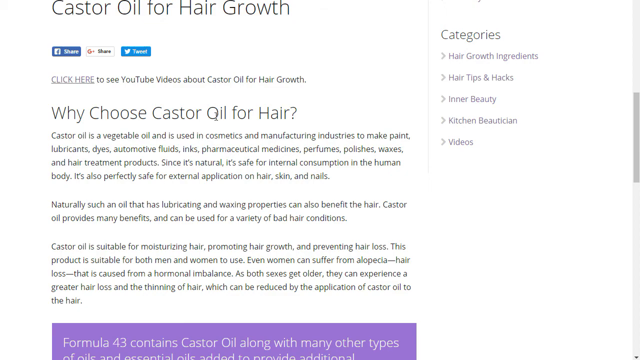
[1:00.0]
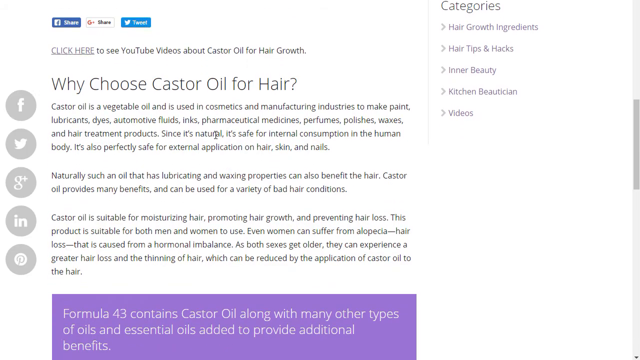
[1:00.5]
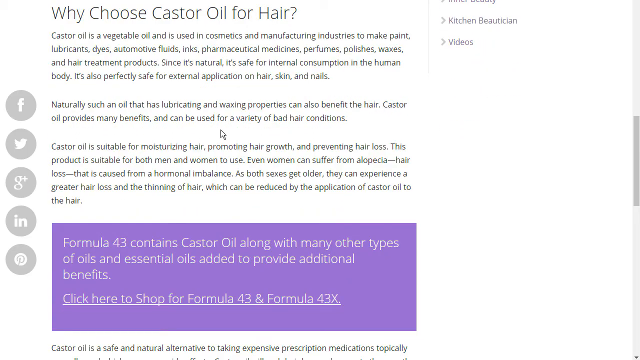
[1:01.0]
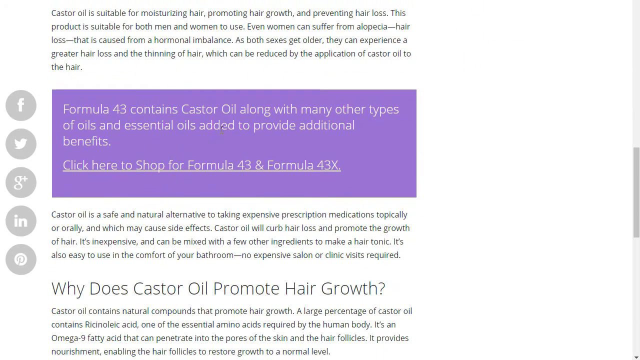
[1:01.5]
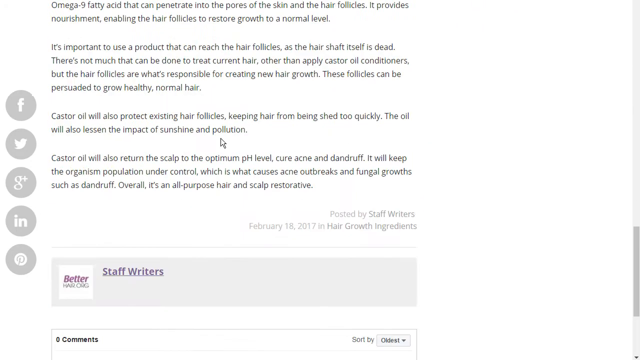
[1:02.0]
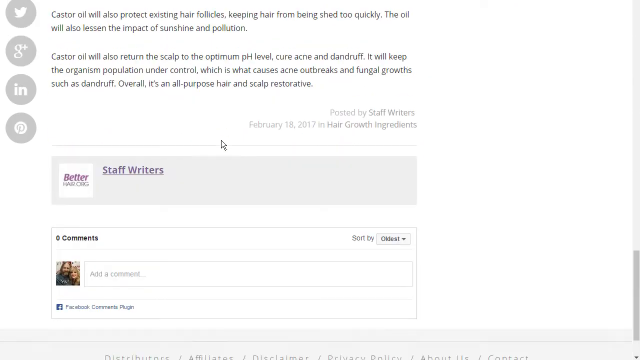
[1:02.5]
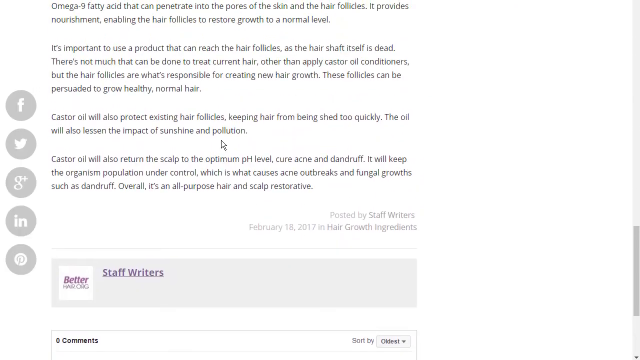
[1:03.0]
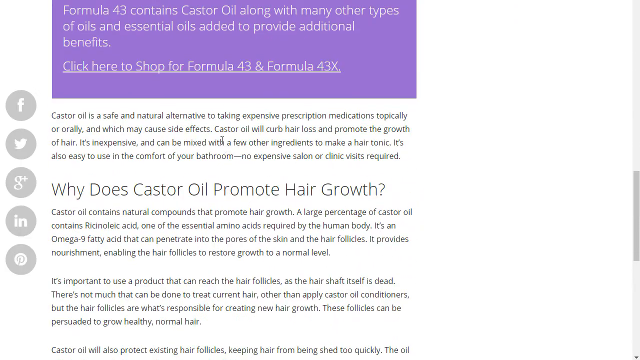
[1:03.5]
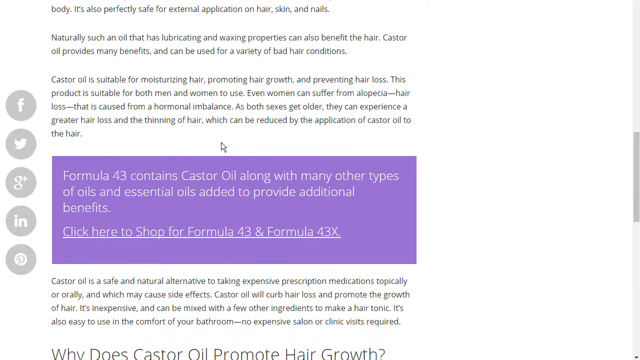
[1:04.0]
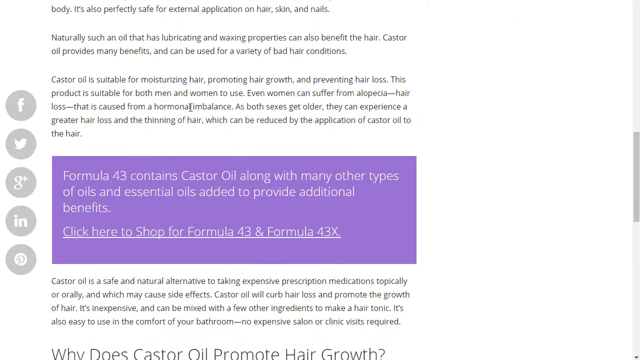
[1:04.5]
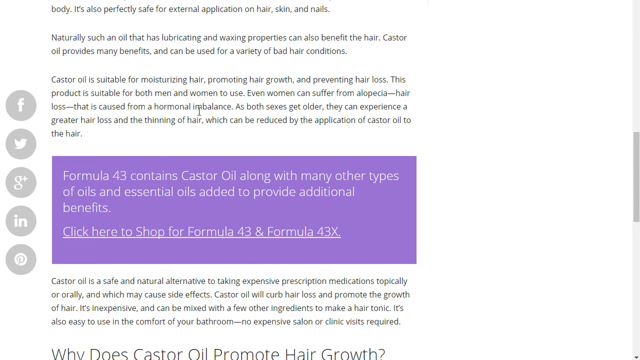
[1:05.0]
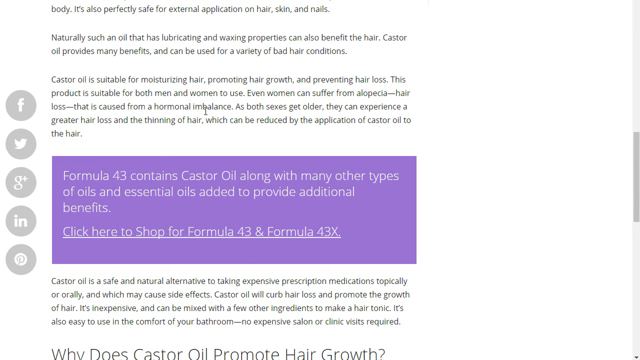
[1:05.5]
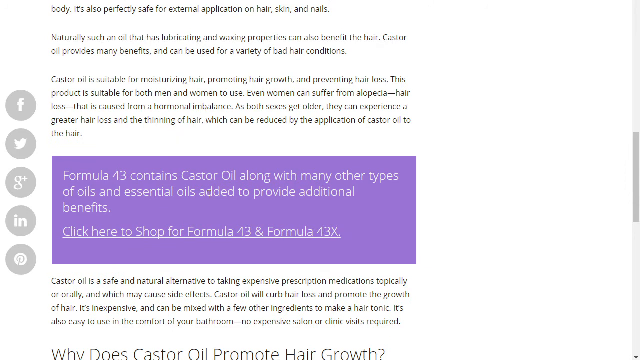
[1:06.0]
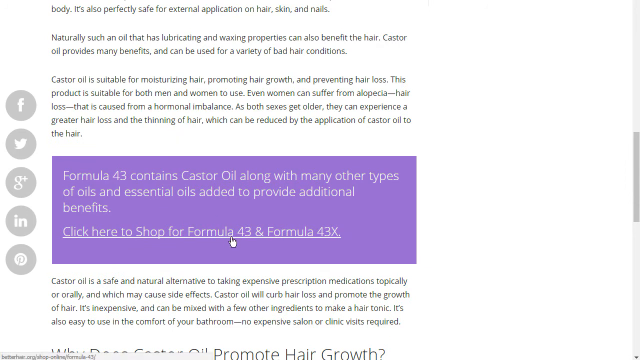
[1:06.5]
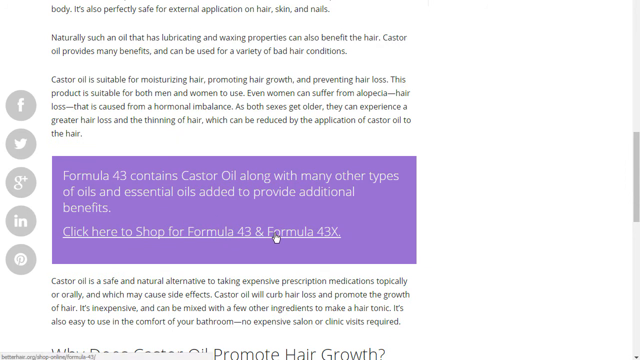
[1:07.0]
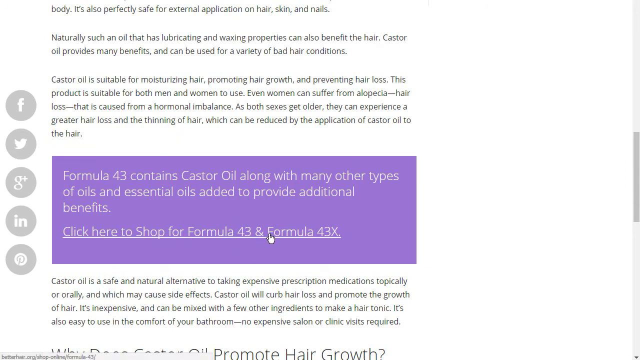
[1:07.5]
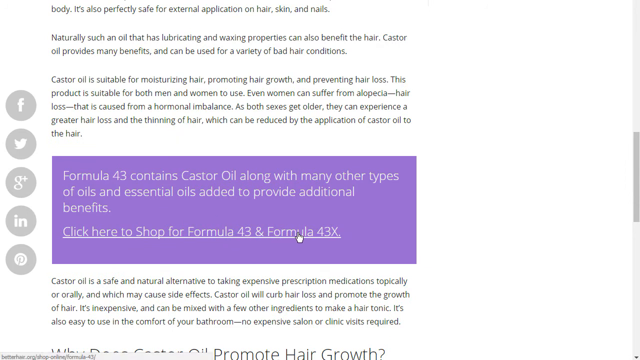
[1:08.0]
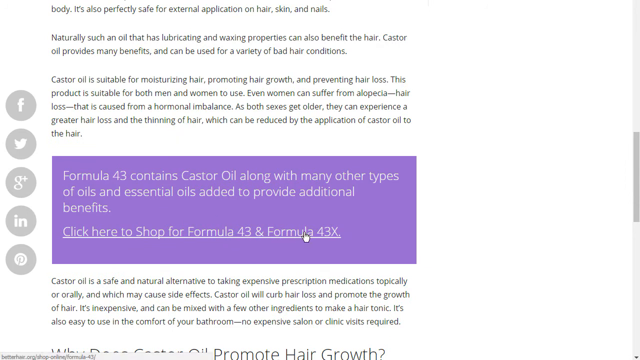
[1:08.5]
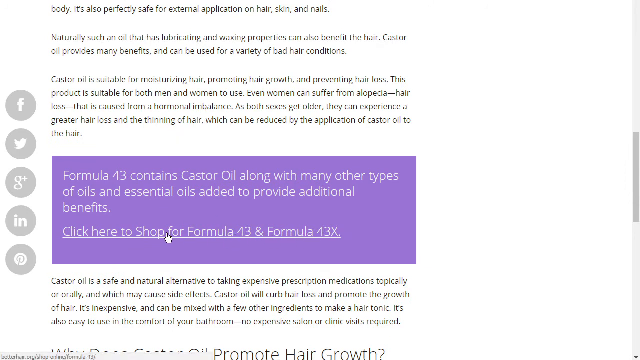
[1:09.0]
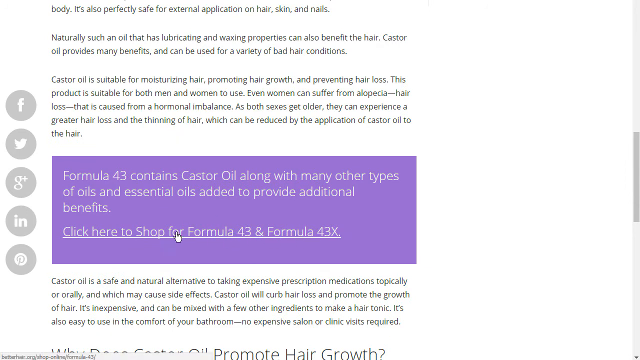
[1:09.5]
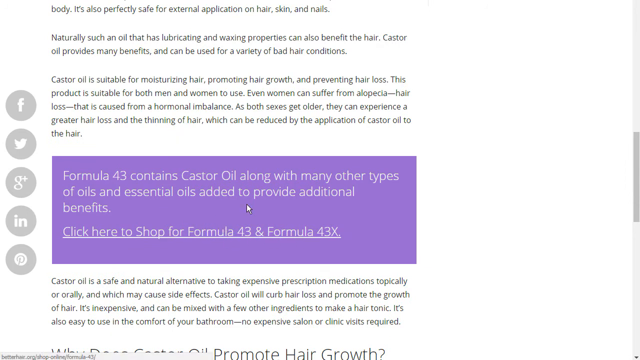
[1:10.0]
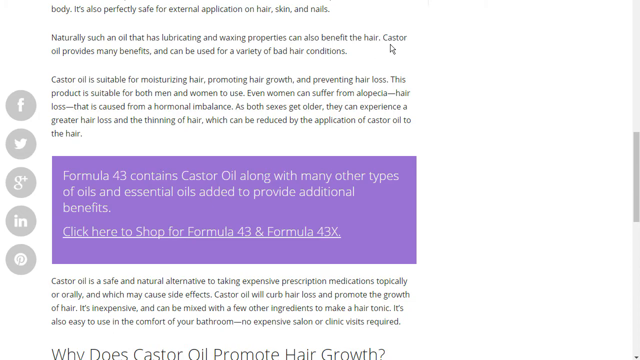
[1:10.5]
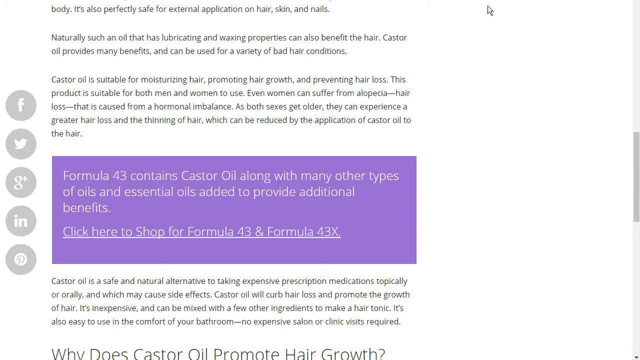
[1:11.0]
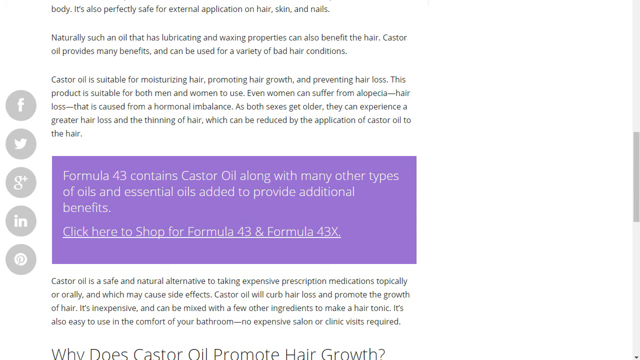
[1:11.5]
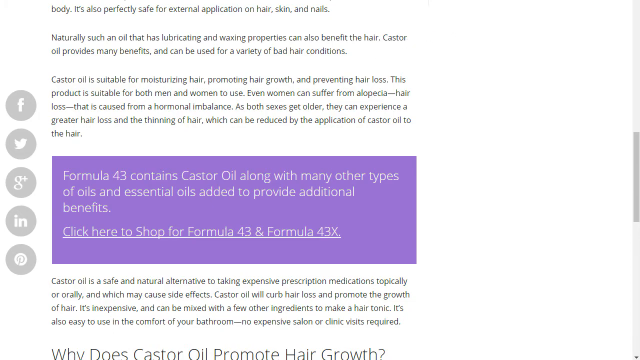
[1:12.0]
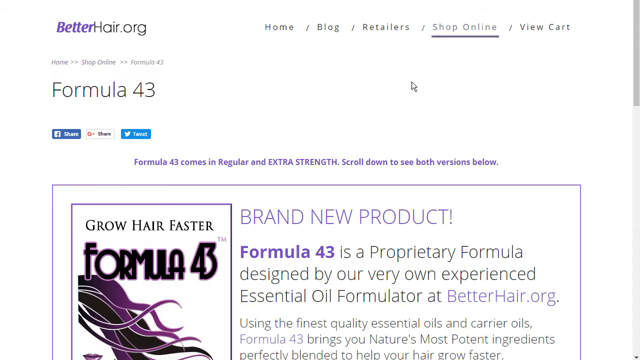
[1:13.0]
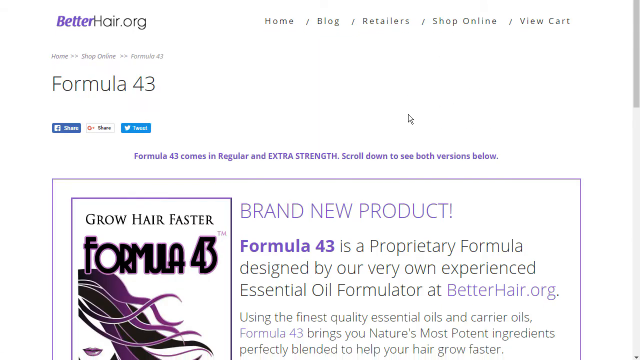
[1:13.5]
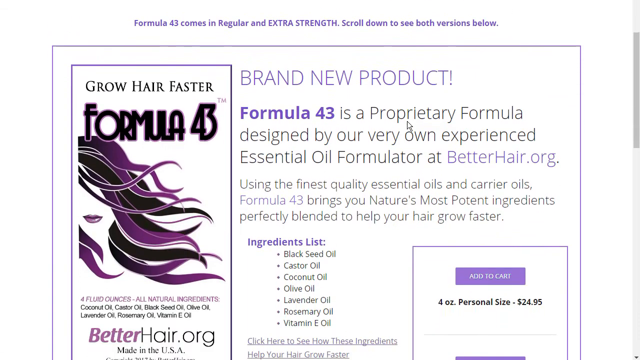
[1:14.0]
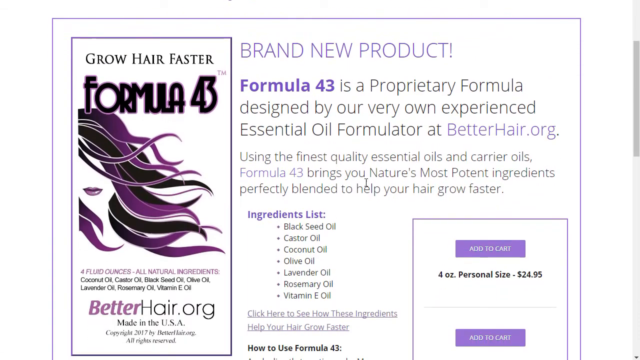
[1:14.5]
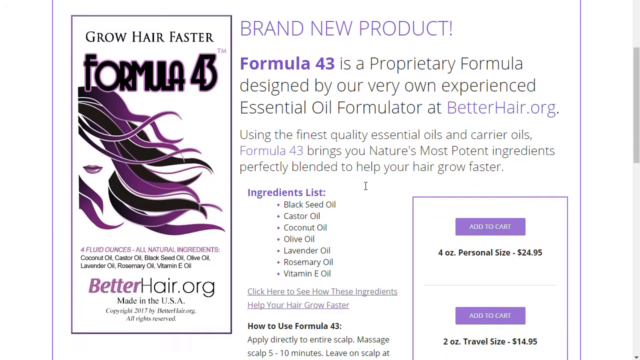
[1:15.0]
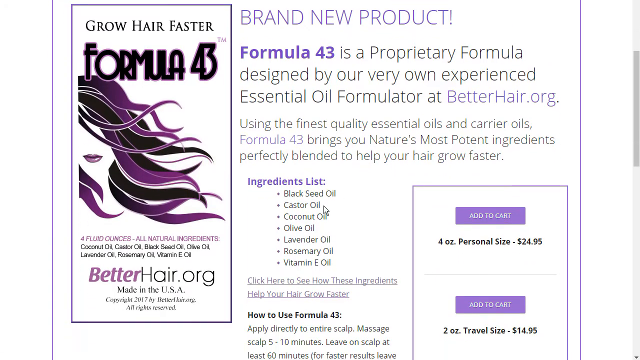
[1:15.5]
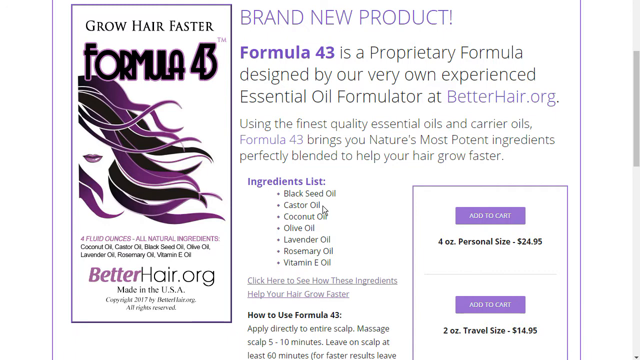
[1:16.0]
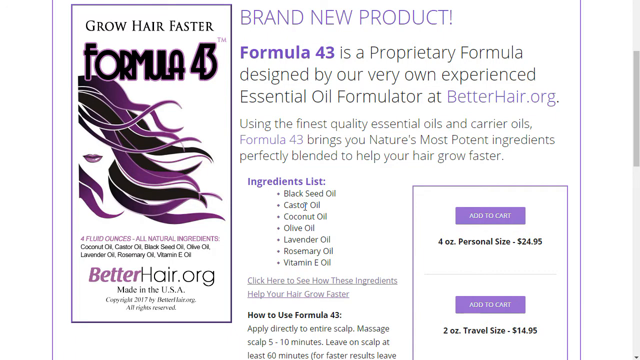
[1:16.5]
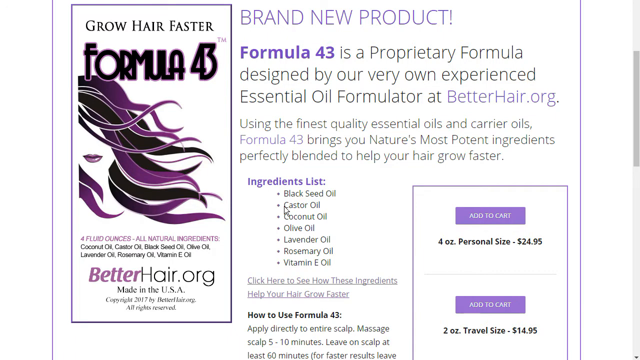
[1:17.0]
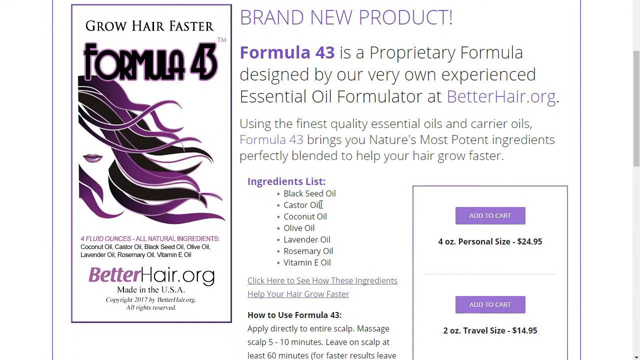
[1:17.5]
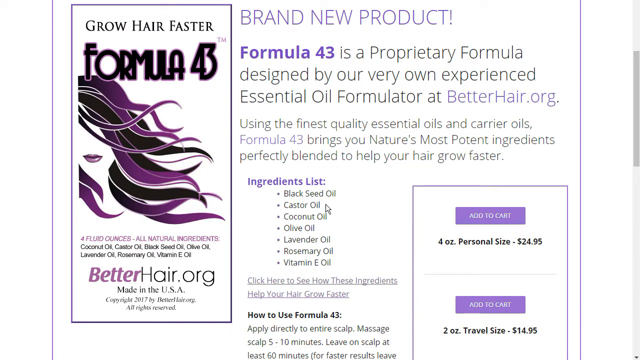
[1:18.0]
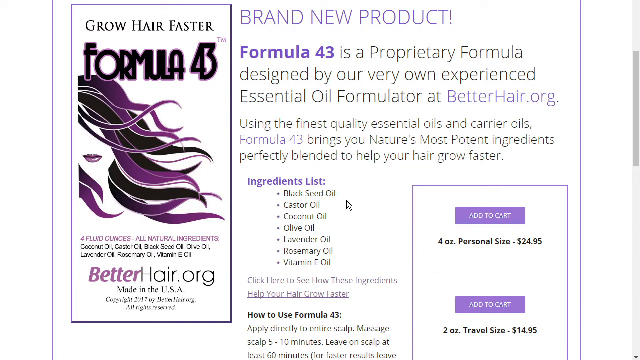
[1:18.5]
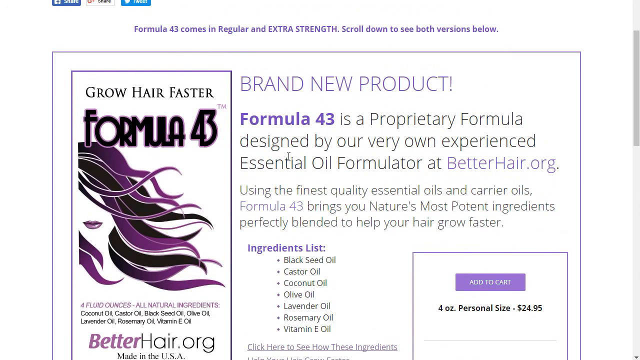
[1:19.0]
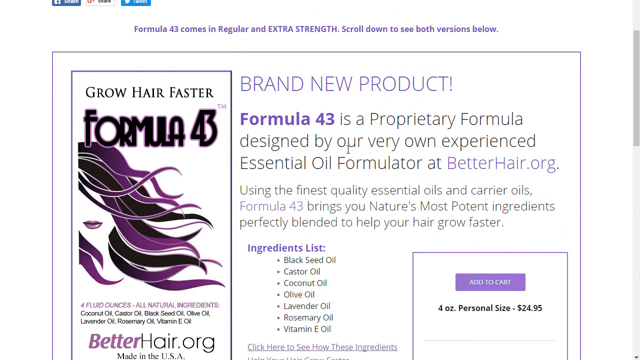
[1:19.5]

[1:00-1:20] The same article is shown with the heading "Why choose castor oil for hair growth?" The cursor continues to scroll down, revealing words in a white font on a purple background that say "formula 43 contains castor oil amongst with many other types of oils and essential oils added to provide additional benefits." The cursor hovers above a link that goes further into explaining what formula 43 is. Text then reads "formula 43 is a proprietary formula designed by our very own experienced essential oil formulator at betterhair.org." Right next to this explanation is a cartoon image of what appears to be a woman with purple and black hair flowing in the air. Just above the head of the cartoon lady are the words "grow hair faster formula 43," and at the bottom are the words "betterhair.org." The cursor continues to hover over some words.